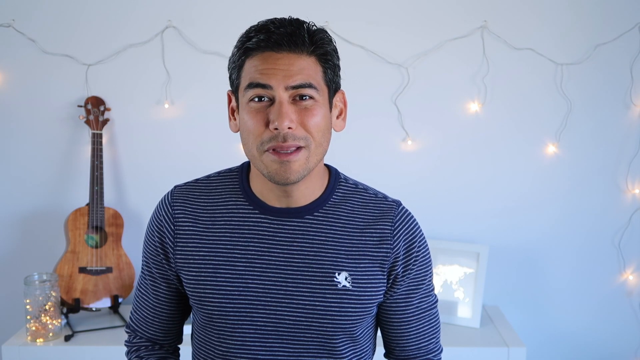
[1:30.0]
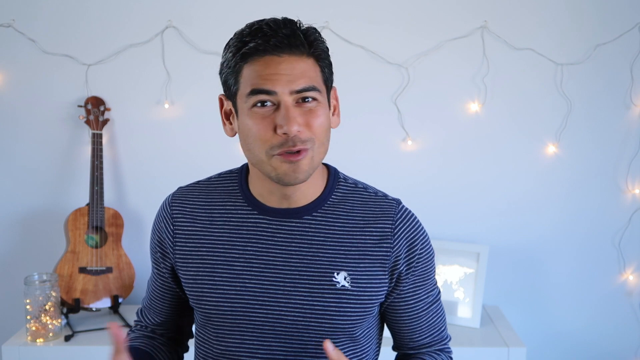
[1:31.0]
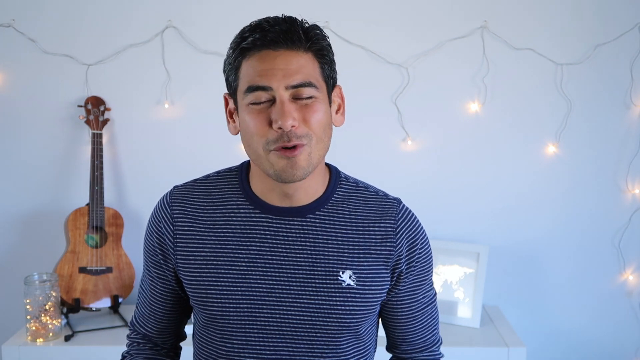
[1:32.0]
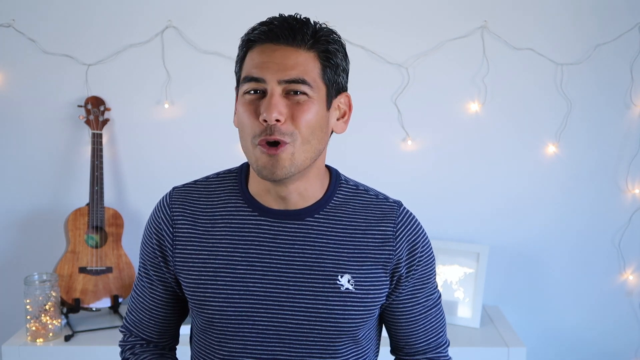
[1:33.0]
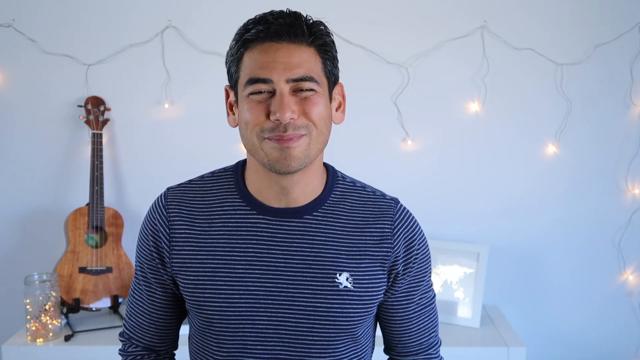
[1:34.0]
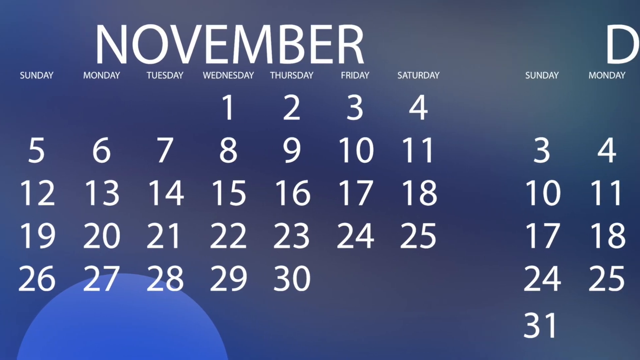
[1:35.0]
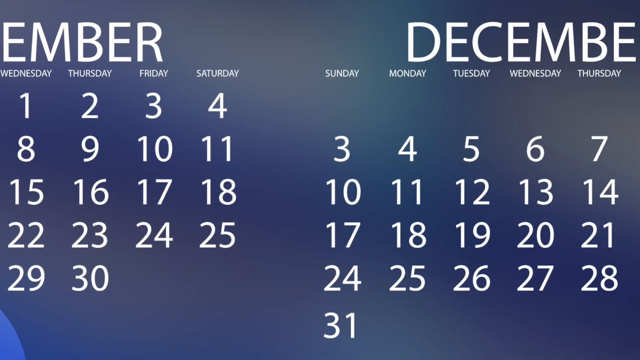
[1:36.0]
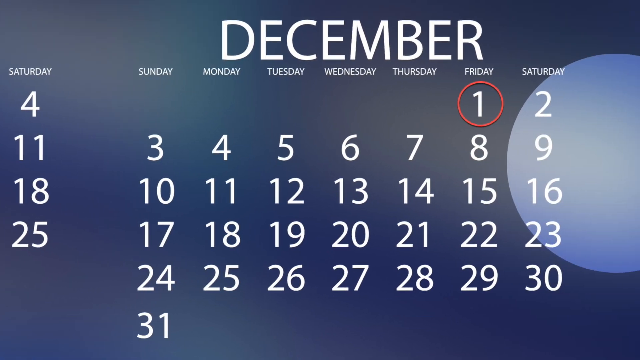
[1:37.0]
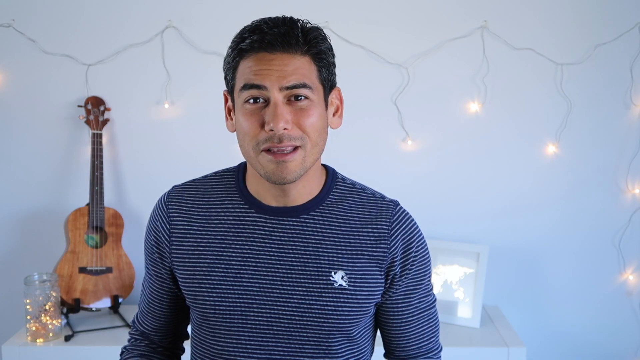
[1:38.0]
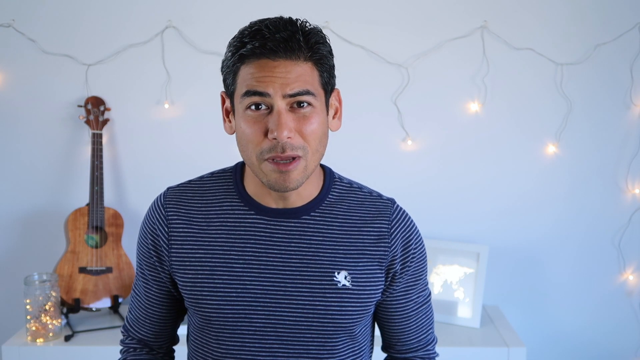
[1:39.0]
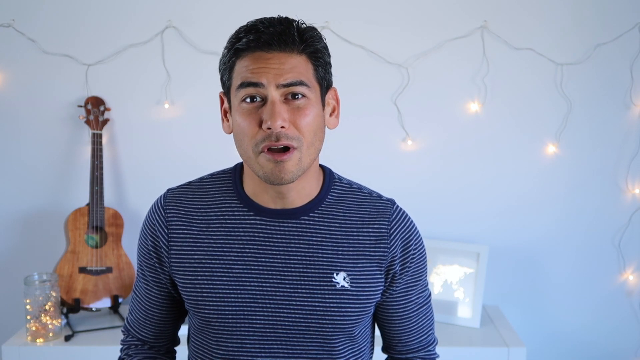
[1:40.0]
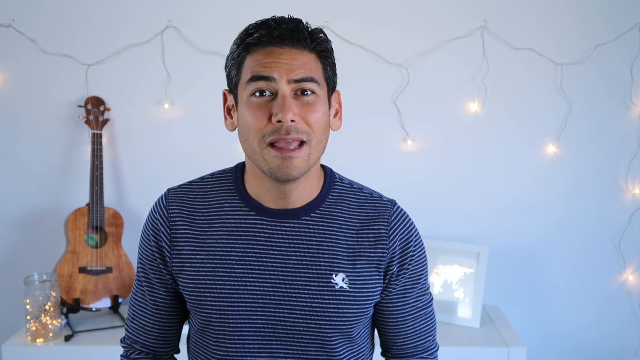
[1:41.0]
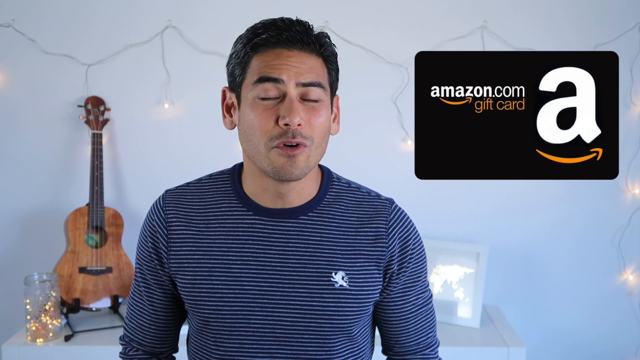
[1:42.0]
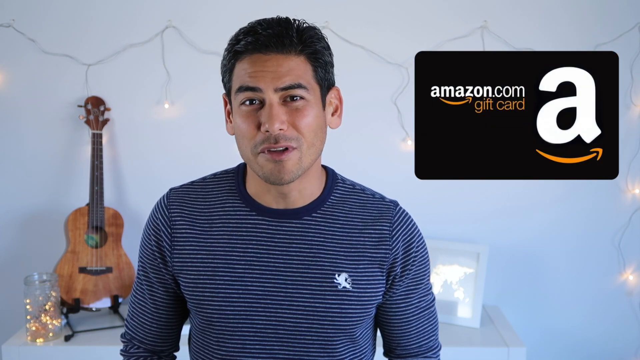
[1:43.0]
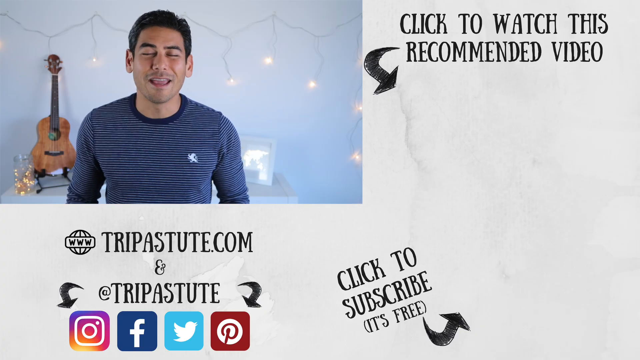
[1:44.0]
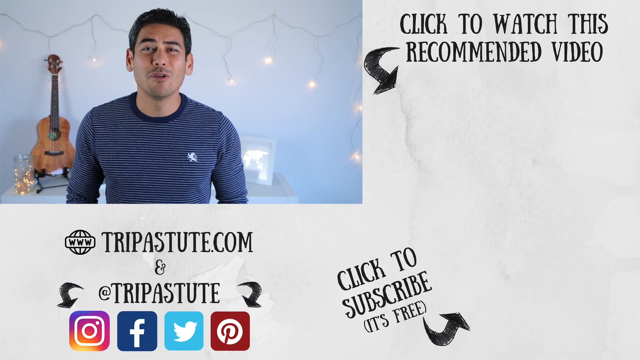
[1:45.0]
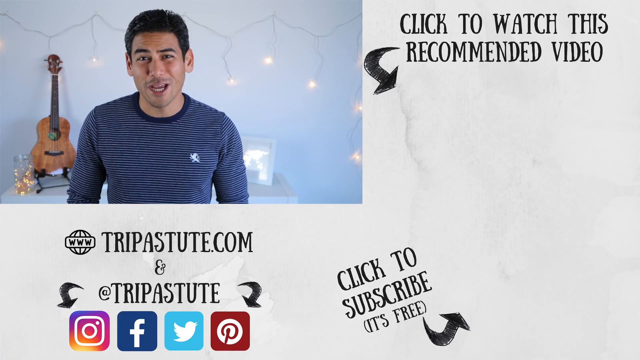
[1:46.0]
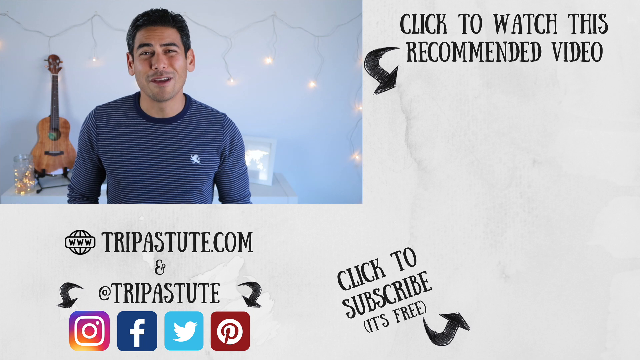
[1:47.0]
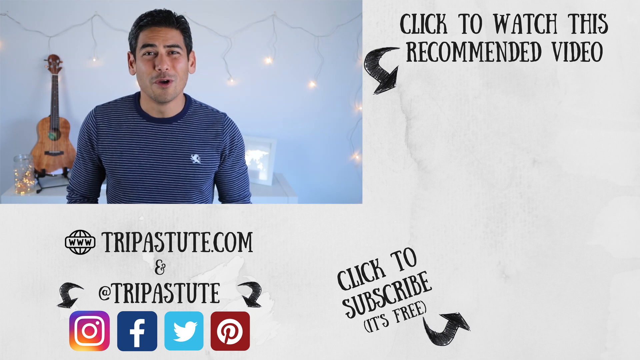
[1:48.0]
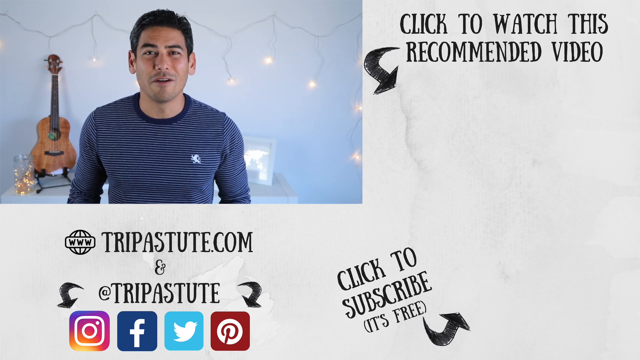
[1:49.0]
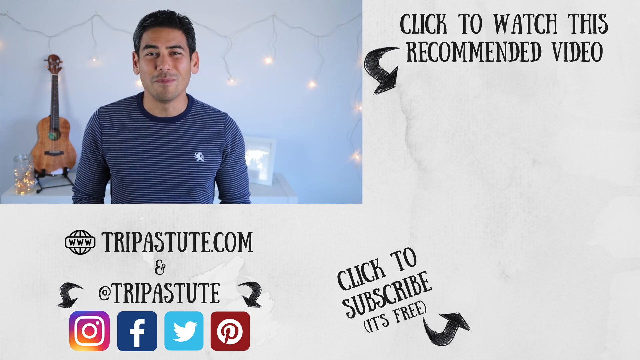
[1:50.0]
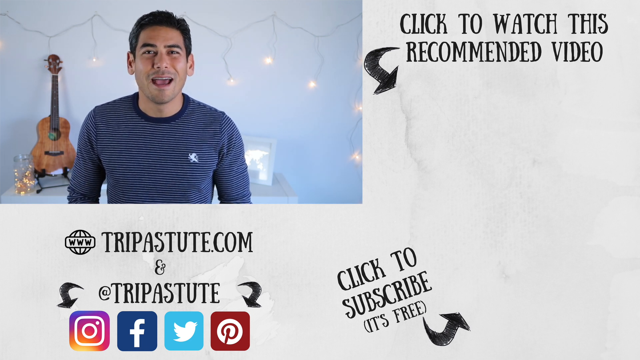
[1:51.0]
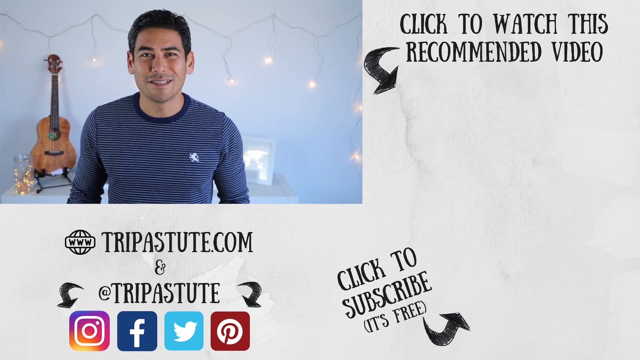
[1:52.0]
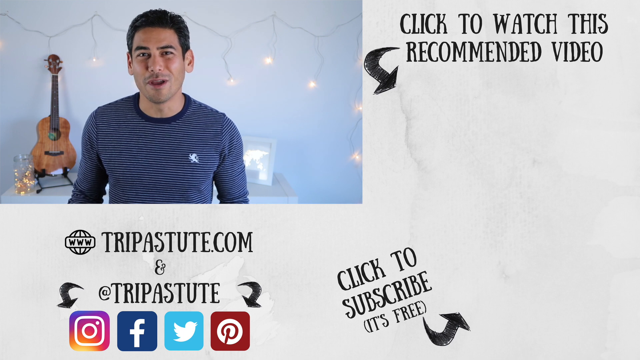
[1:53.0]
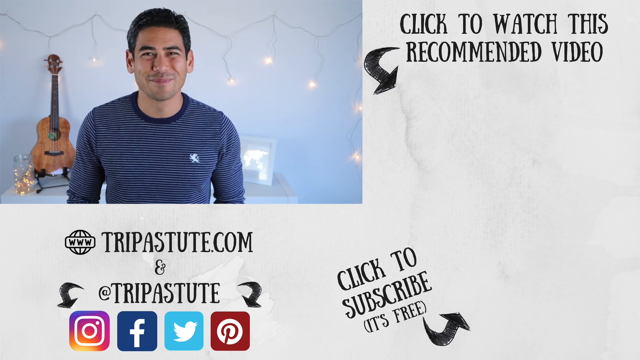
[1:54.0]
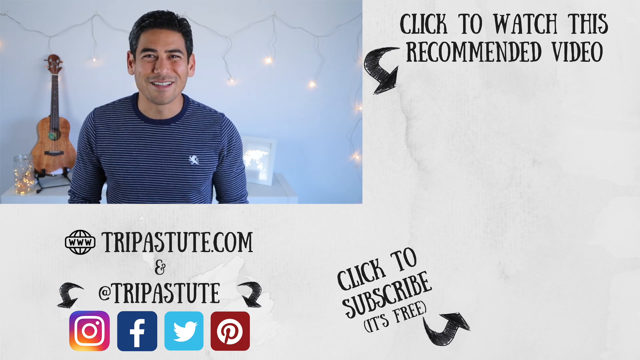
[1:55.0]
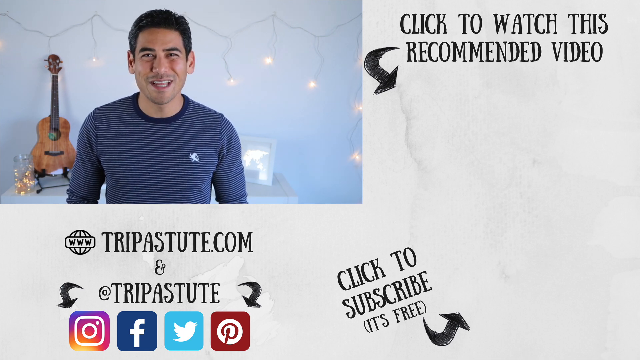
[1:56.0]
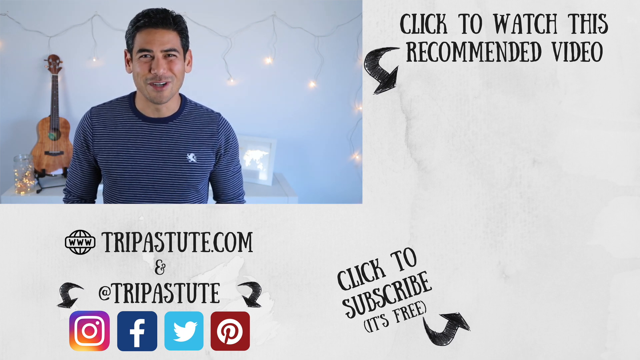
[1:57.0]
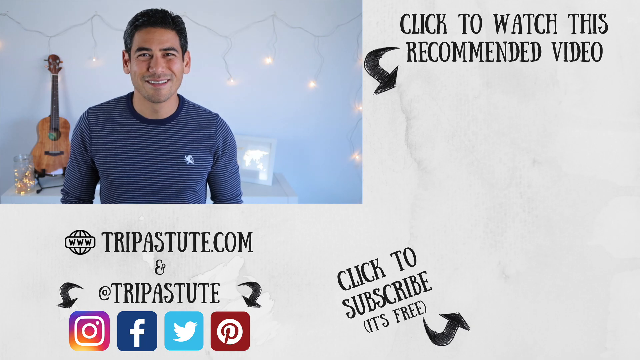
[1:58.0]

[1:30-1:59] The presenter, who runs a channel called Trip Astute on YouTube, speaks to the camera from a white room with Christmas-tree-type lights hung around it and a guitar. An image of a calendar scrolls from right to left: the month of November, then December, with Friday the 1st of December circled in red. The video returns to the presenter speaking directly to the camera, and an Amazon.com gift card icon appears in the top right corner. A miniaturized version of him then speaks to the camera in the upper left corner, while the rest of the screen has a number of sort of scribbled-on links: "Trip Astute.com", social media links such as Instagram, Facebook, Twitter and Pininterest, a link to "click to watch this recommended video", and "click to subscribe. It's free". He keeps speaking to the camera while all this information stays displayed.